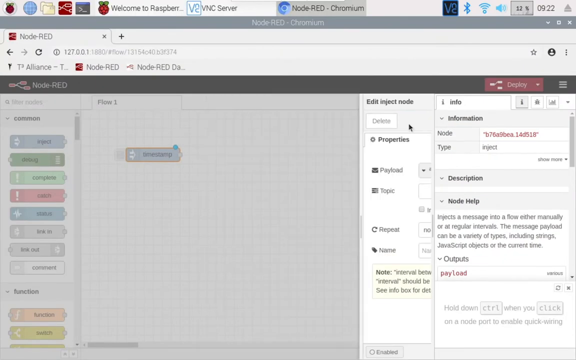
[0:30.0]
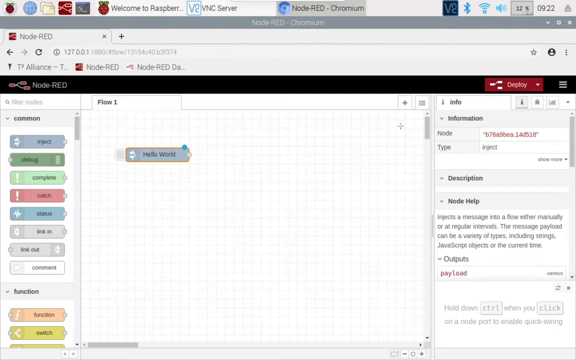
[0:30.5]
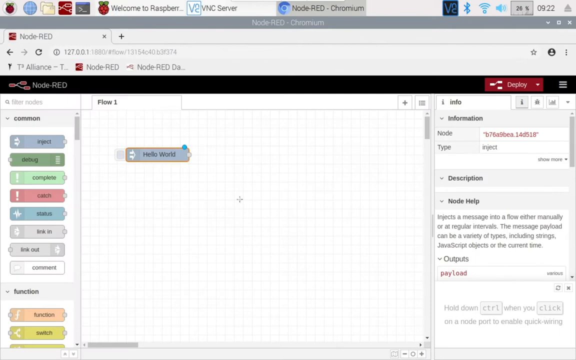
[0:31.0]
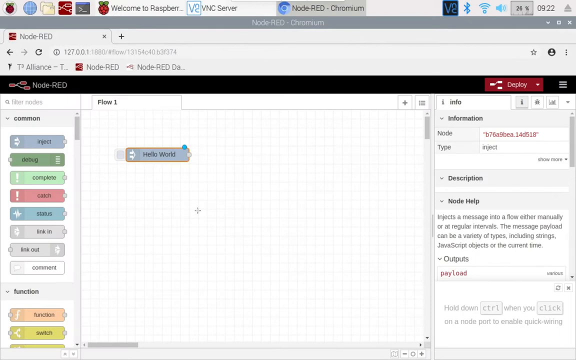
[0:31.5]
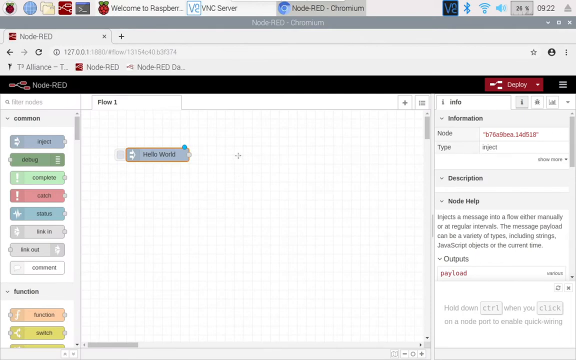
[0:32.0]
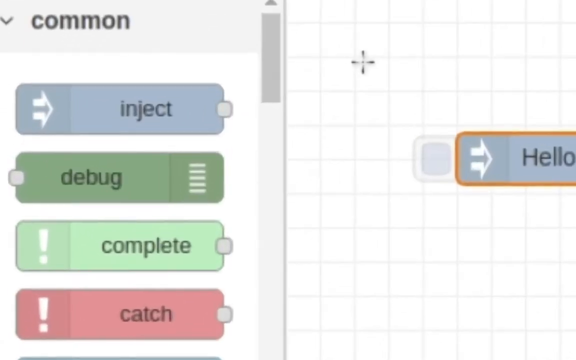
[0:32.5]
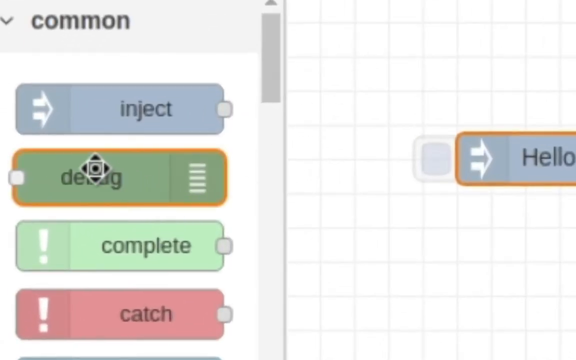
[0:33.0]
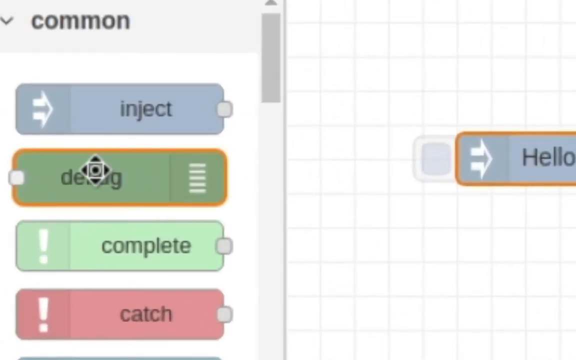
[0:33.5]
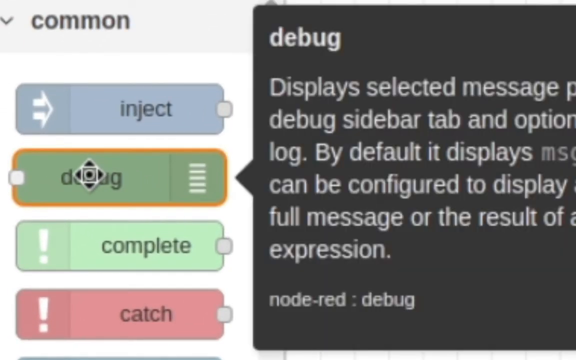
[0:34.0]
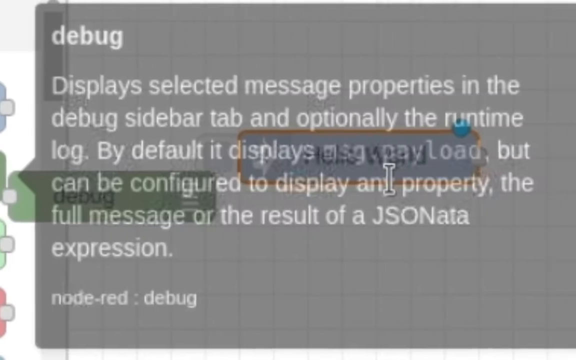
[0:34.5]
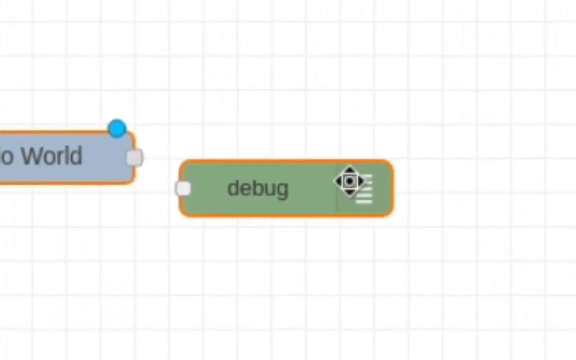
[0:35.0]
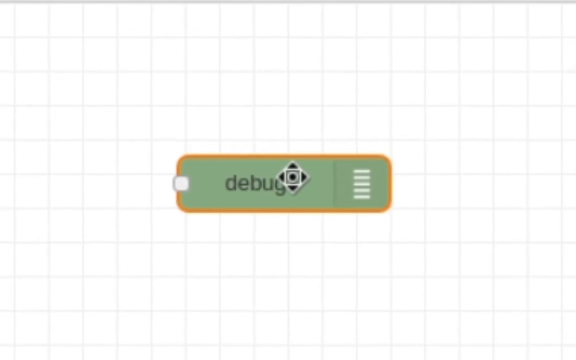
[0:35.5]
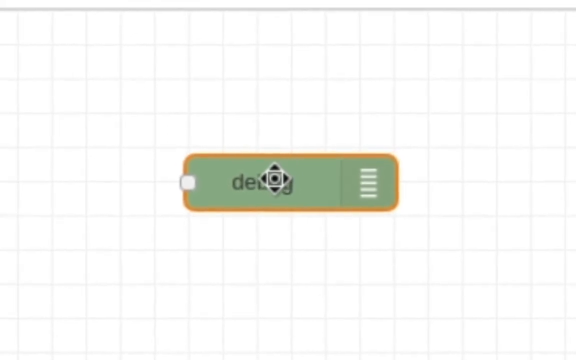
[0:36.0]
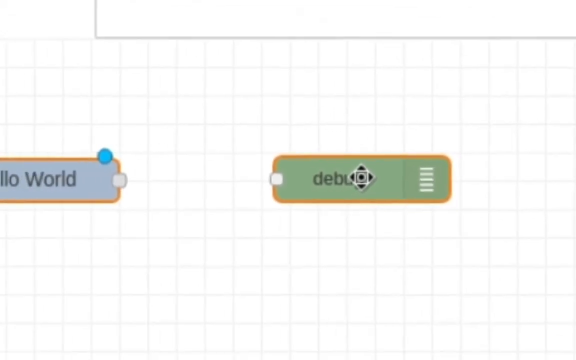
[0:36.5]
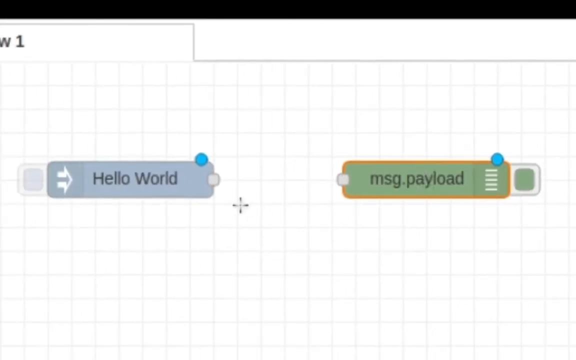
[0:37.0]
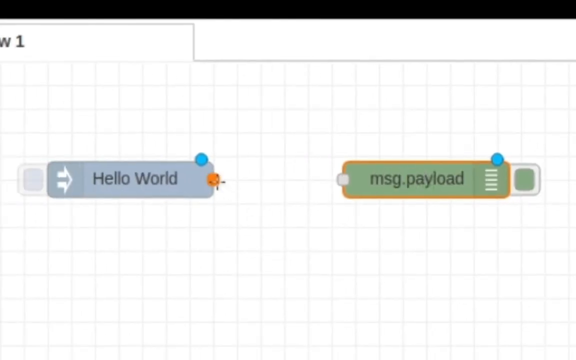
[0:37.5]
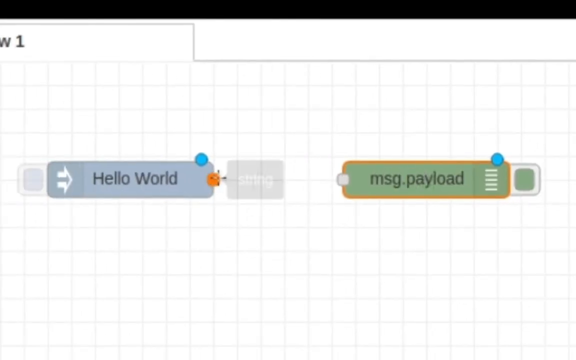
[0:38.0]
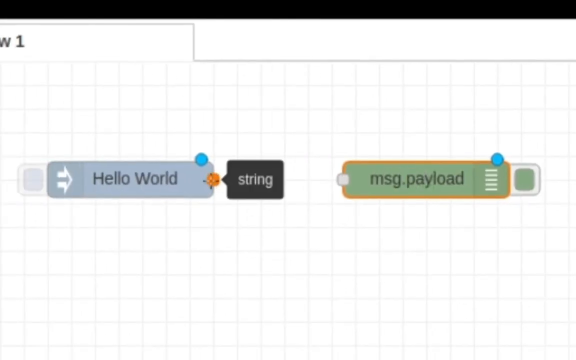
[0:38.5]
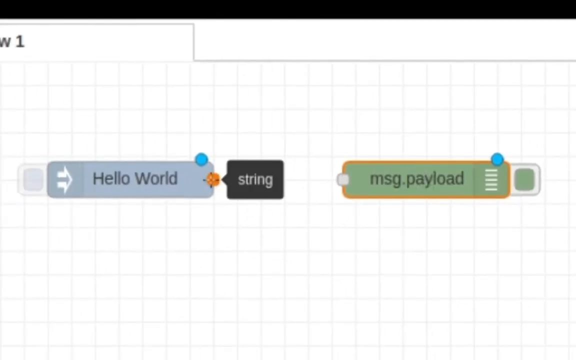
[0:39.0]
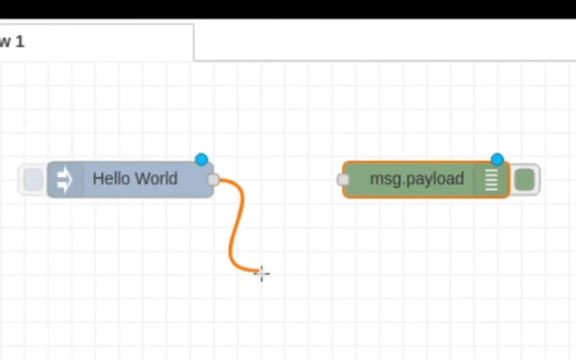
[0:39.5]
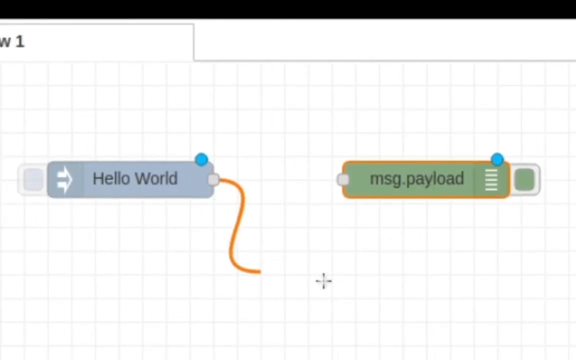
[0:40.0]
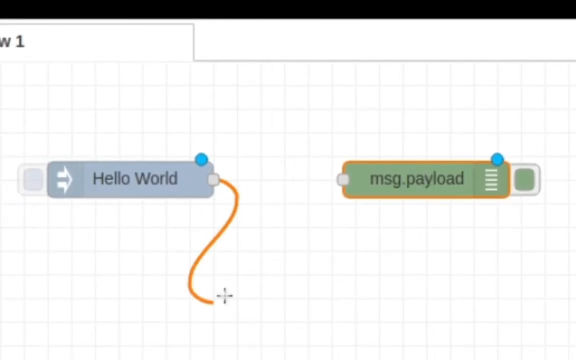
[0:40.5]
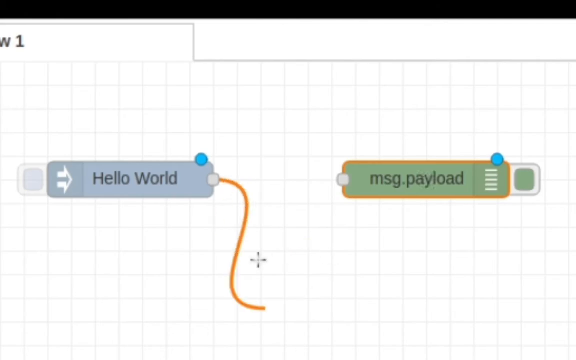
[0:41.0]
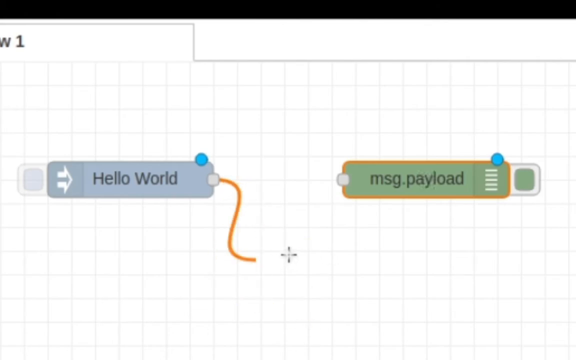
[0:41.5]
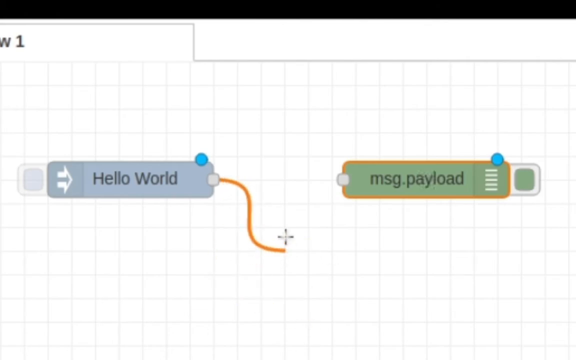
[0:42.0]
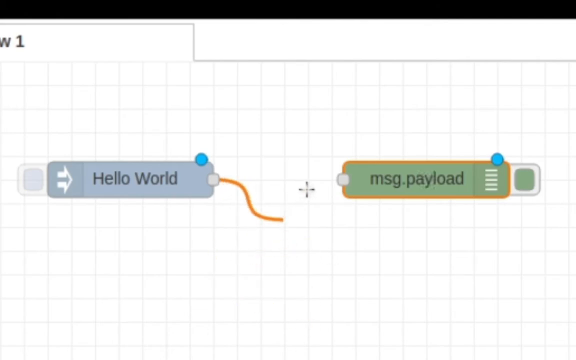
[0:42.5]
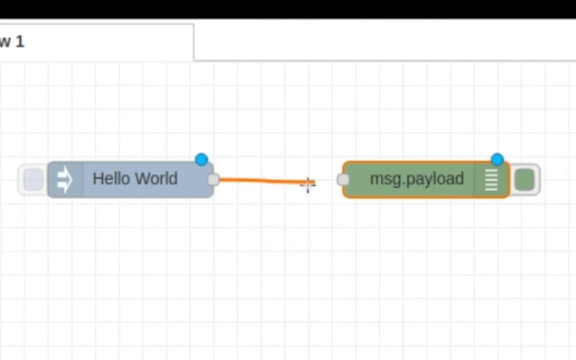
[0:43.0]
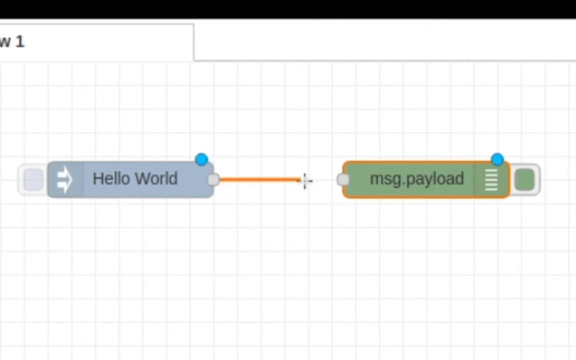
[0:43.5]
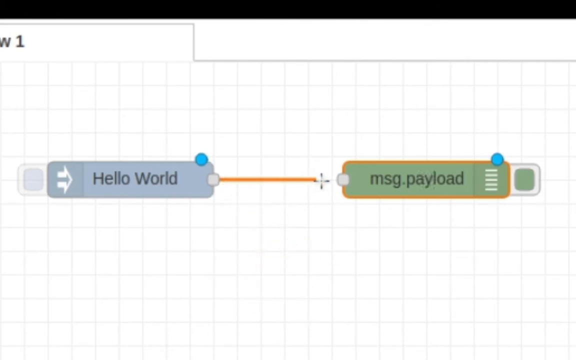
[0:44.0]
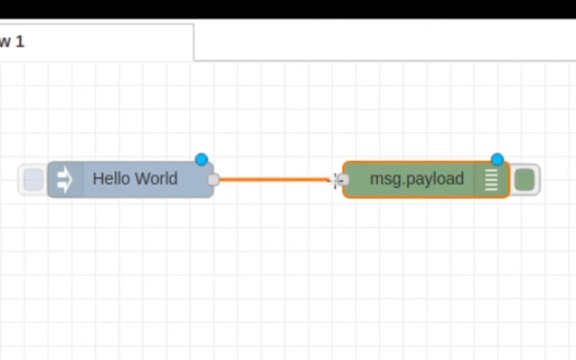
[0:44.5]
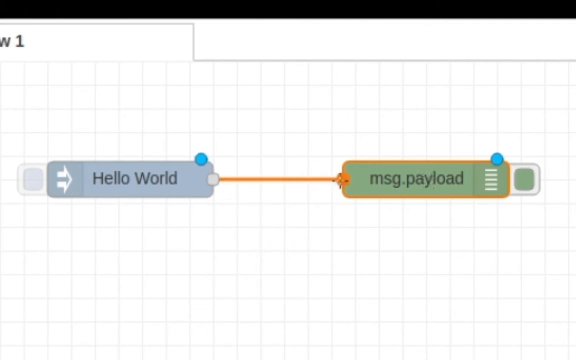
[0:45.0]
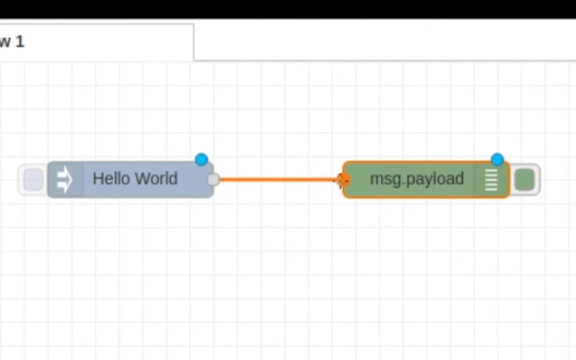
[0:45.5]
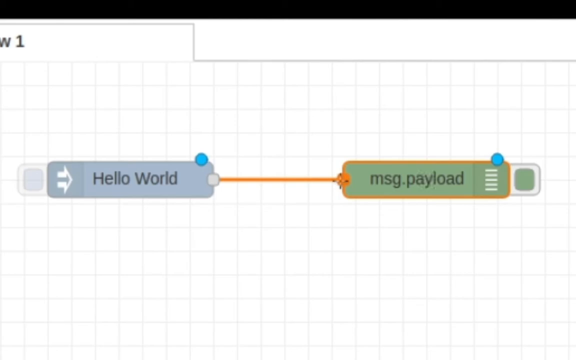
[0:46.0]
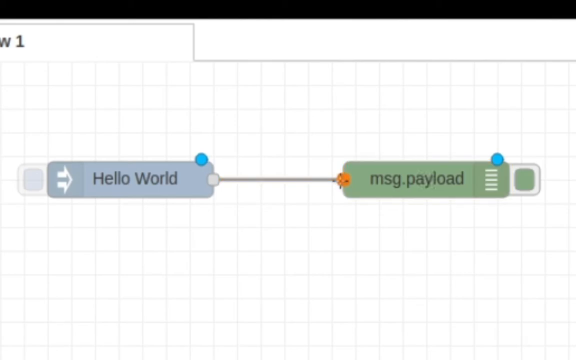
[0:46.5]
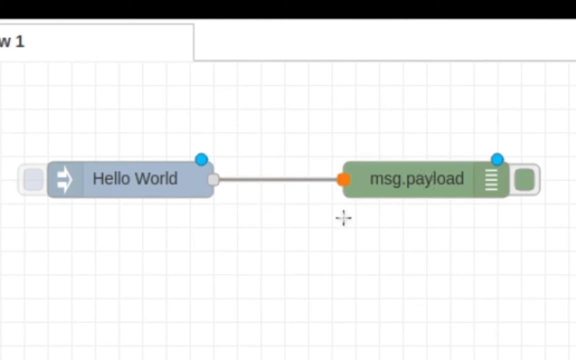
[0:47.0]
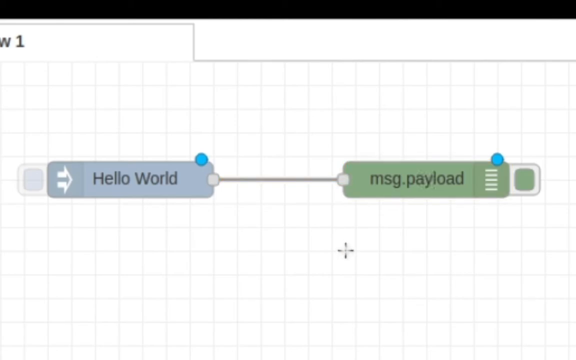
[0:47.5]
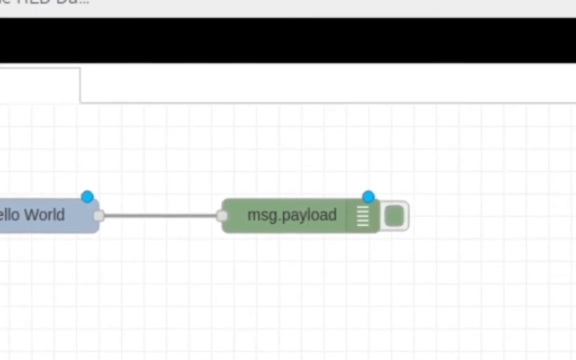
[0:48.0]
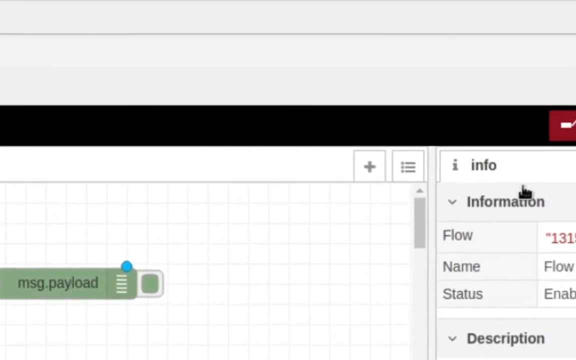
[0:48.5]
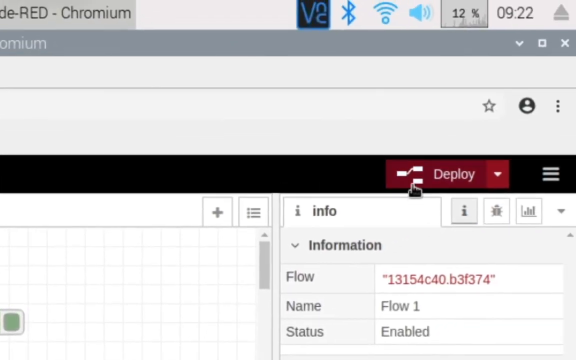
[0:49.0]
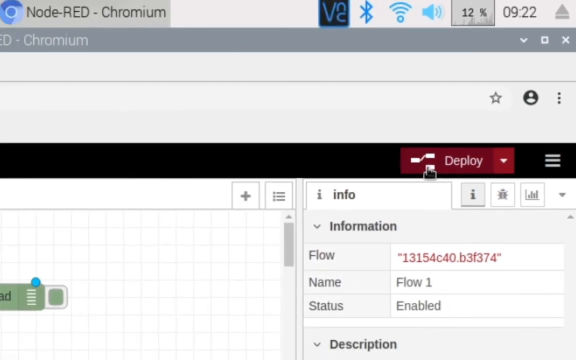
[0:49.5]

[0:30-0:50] The person shows how to use the document, demonstrating that strings can be matched to any other column that has been typed. The demonstration covers how to match the columns, where to type, and how to remove something if a mistake has been made in the Excel document, as well as where to go and how to type.